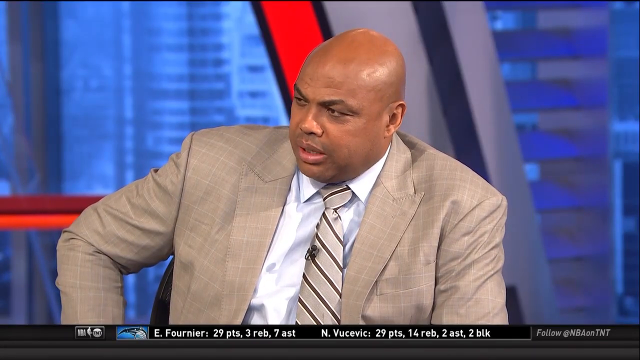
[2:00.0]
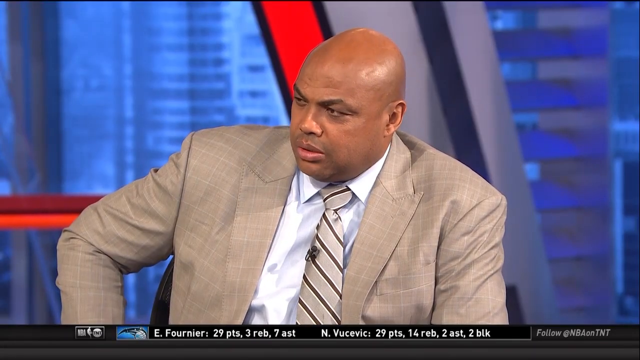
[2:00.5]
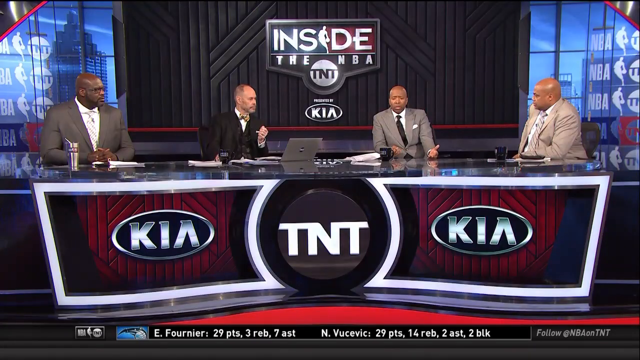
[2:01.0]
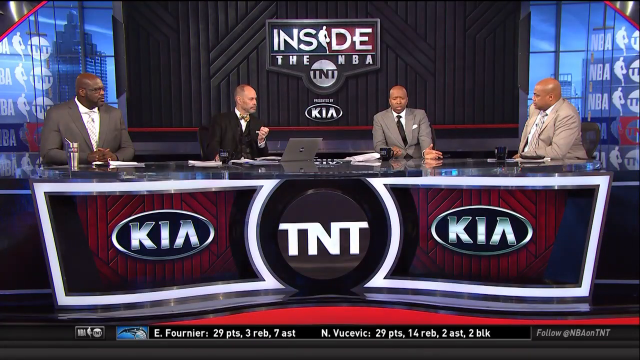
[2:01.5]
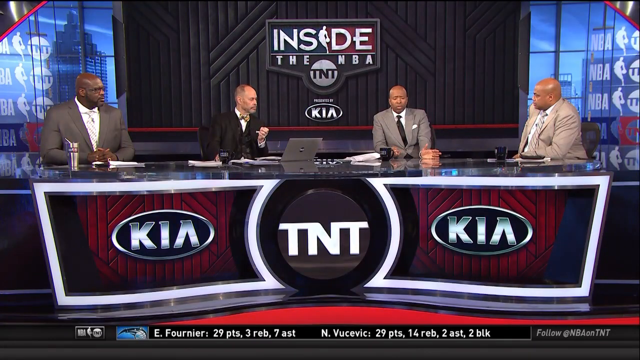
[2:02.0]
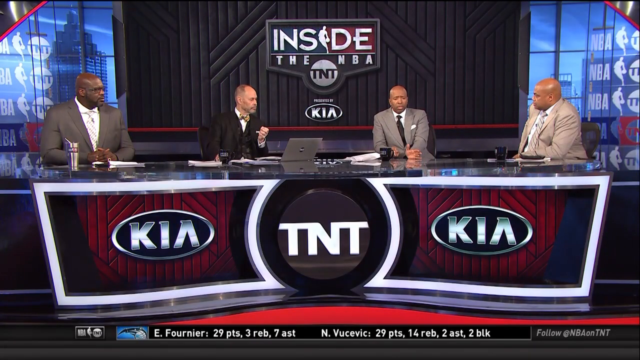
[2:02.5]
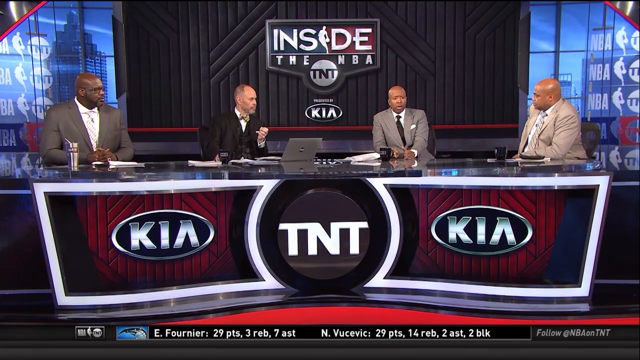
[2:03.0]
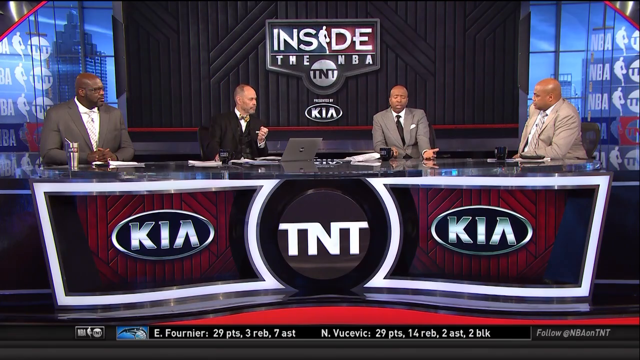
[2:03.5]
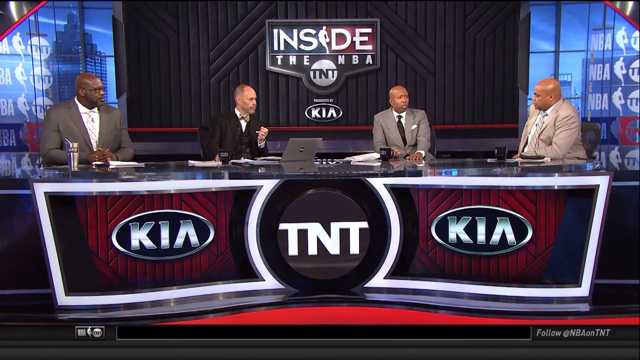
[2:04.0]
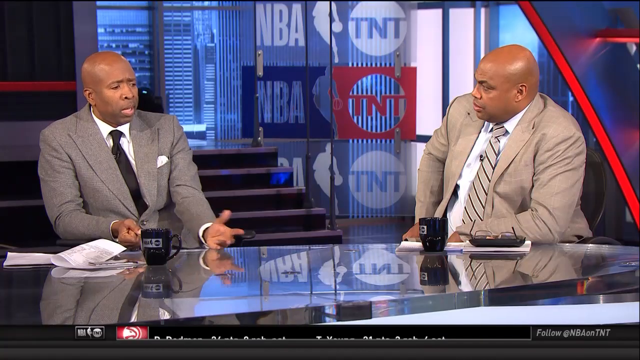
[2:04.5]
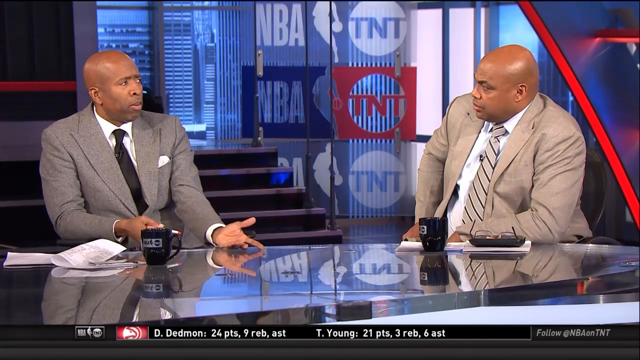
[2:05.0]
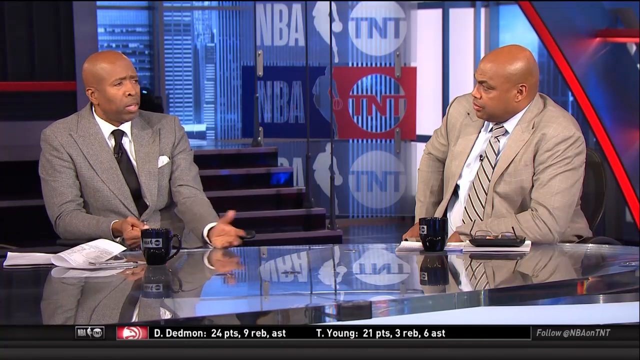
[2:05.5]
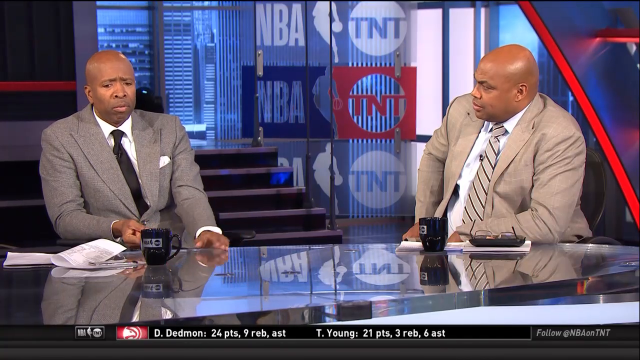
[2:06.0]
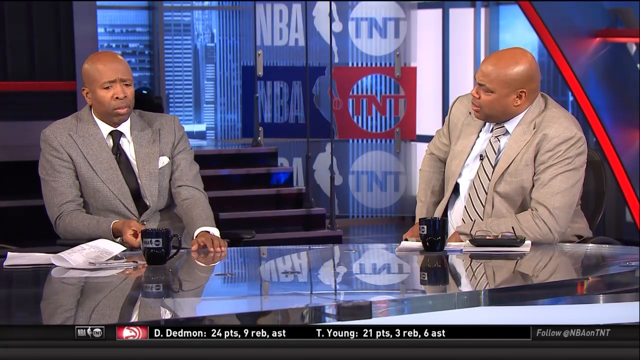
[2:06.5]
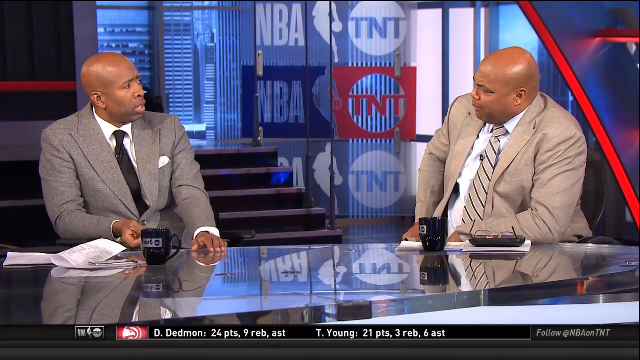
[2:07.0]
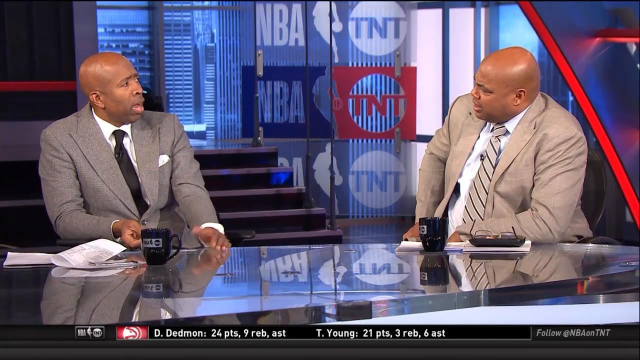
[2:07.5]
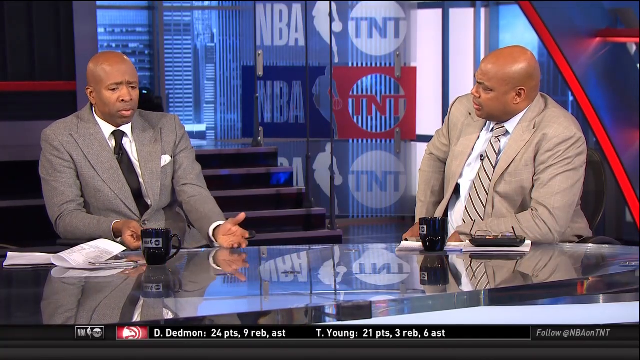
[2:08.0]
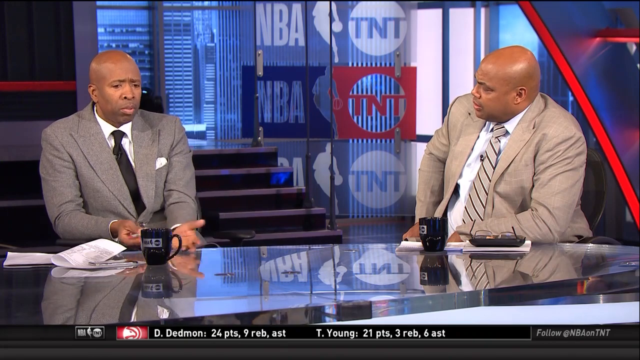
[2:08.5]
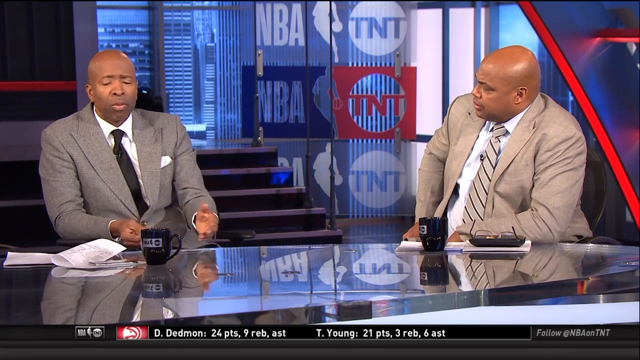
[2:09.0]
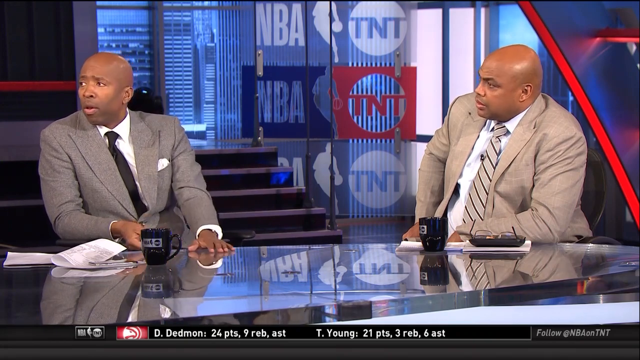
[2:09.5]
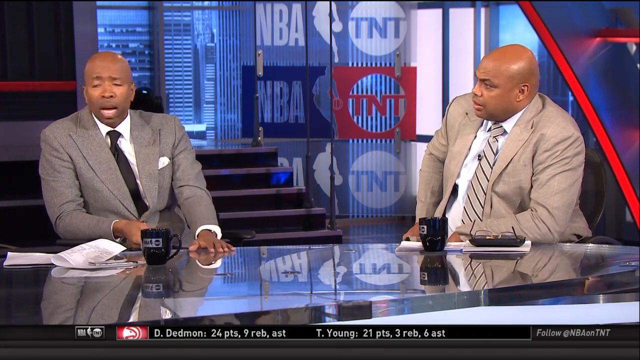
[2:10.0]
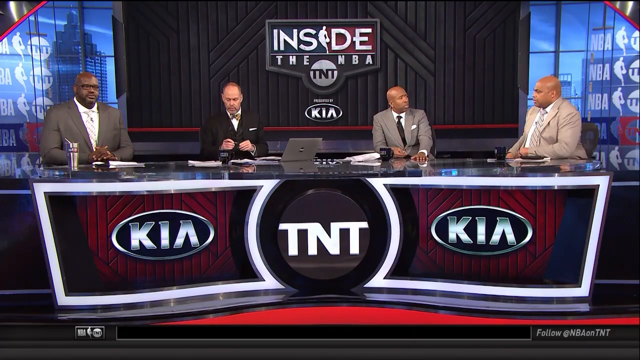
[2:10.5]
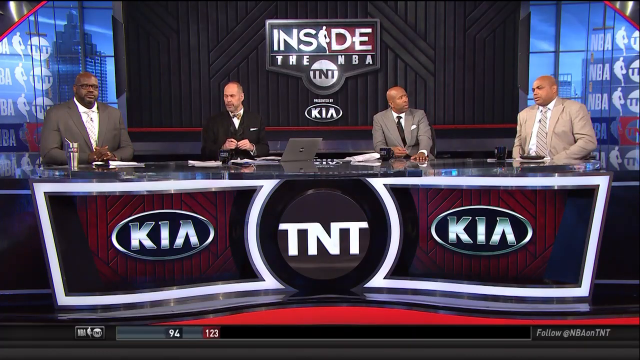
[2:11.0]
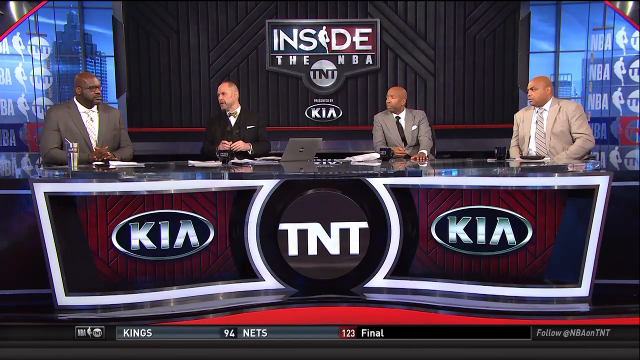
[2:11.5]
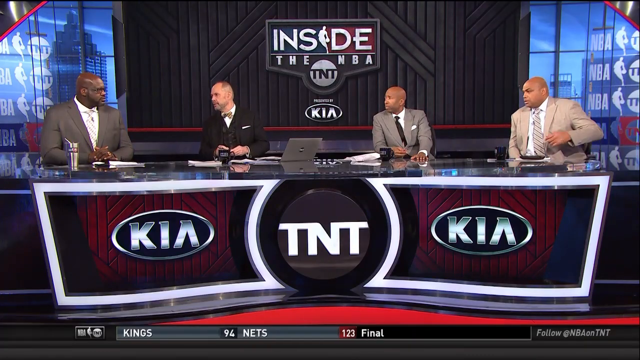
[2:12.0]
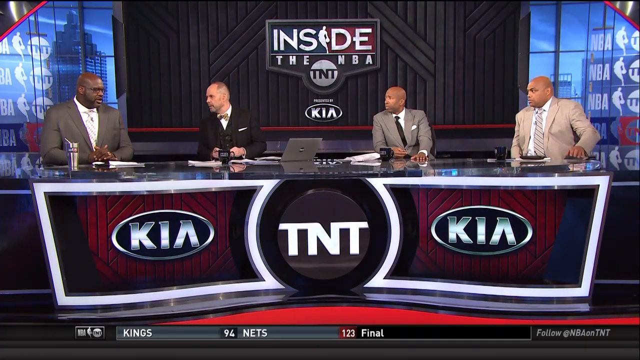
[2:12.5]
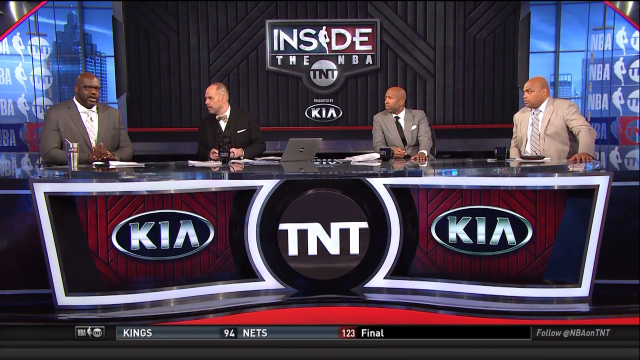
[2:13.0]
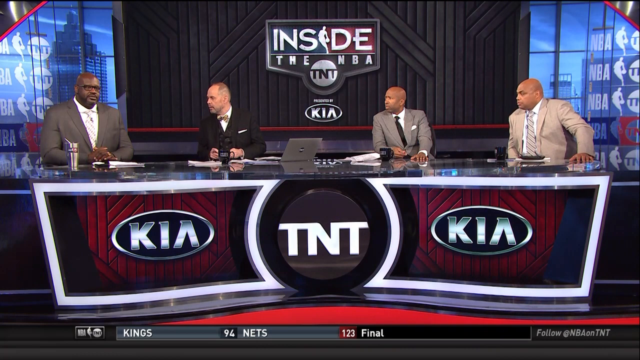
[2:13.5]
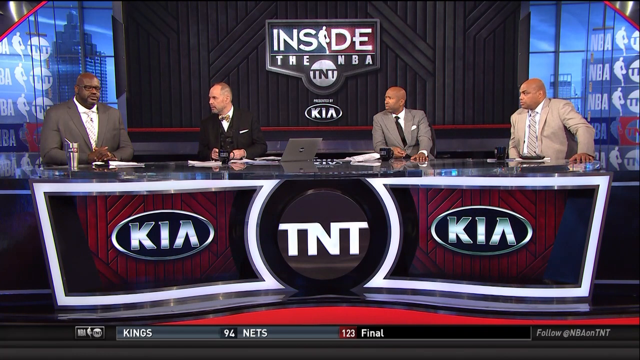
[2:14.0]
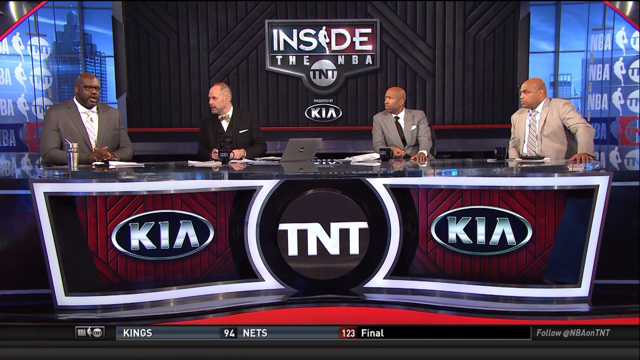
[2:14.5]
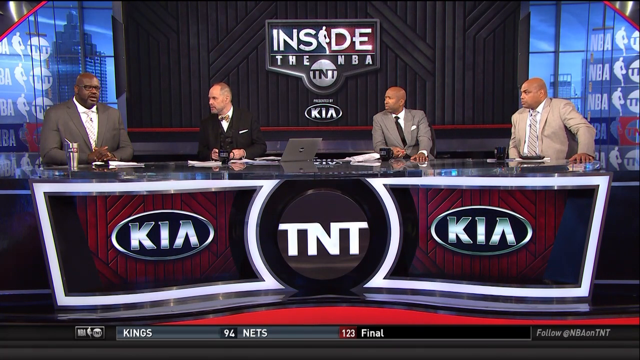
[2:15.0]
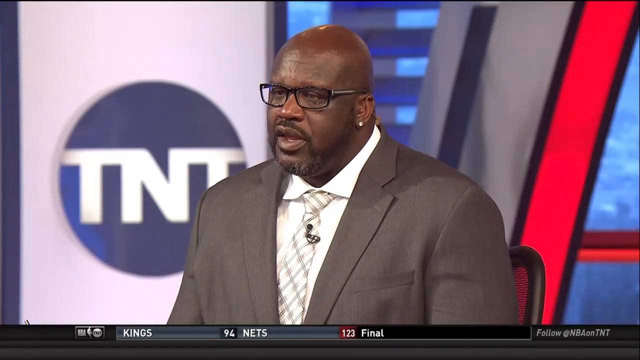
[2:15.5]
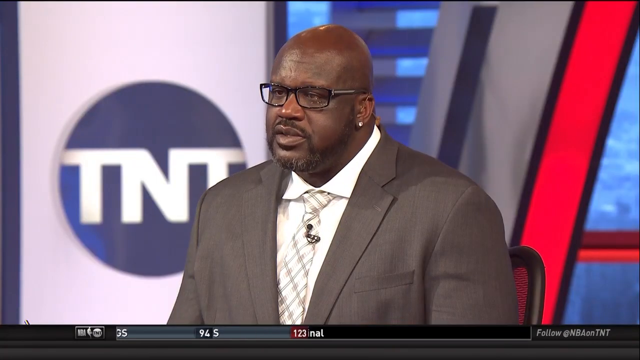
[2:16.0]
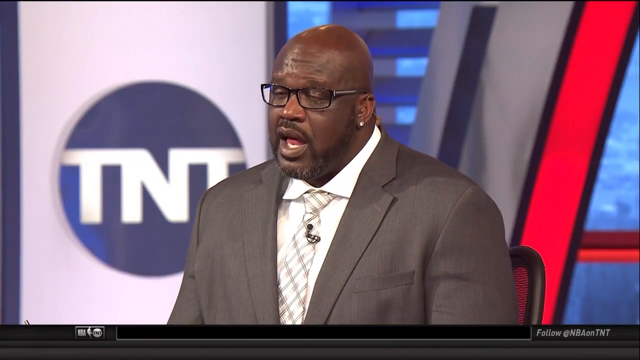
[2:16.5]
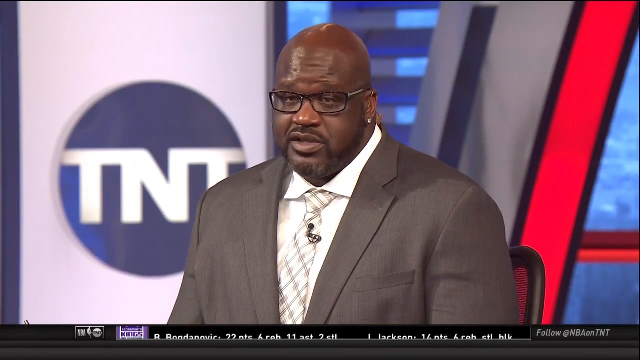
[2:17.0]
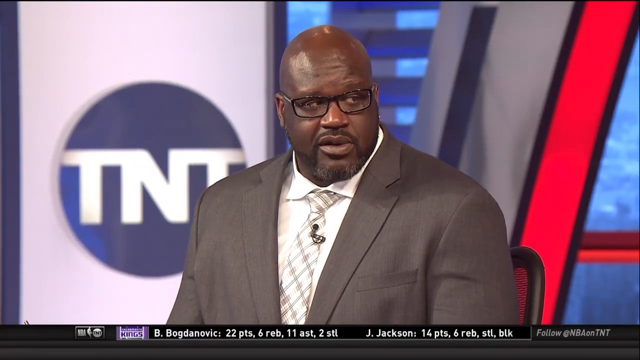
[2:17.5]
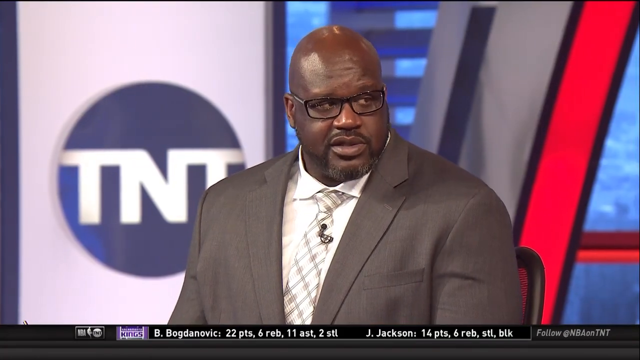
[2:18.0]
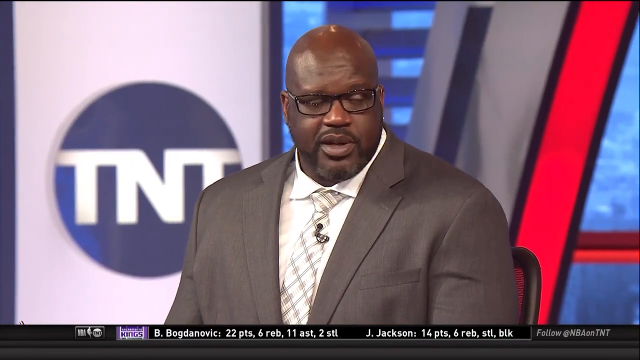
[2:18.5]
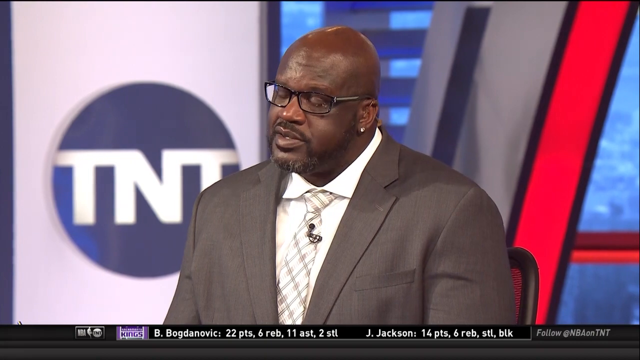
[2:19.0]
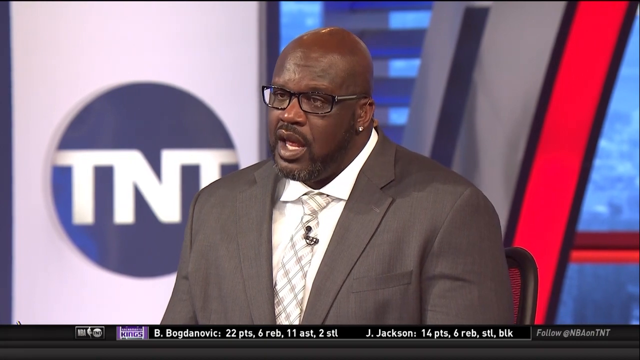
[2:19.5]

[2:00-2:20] A very wide black desk appears. On the left side of its front is a white outlined square with a red square in the middle, and inside that a black oval with the letters "KIA" in silver. To the right of that is a black circle with the letters "TNT" in white, and to the right of that is another white outlined square containing a black square with a red square in it, and in the middle of that a black oval with the letters "KIA" in silver. Four men sit at the desk. The one on the left is a black man in a white button-up shirt, light tie and gray suit. To his left is an almost bald white man in a black suit, white shirt and bow tie. To his left is a black man in a white shirt, gray suit and black tie, and to his left is a black man in a tan suit, white shirt and tan and brown striped tie. Each has a black coffee cup in front of him. Behind them is a black wall with "Inside the NBA" in the middle, "TNT" underneath, and "KIA" beneath that.